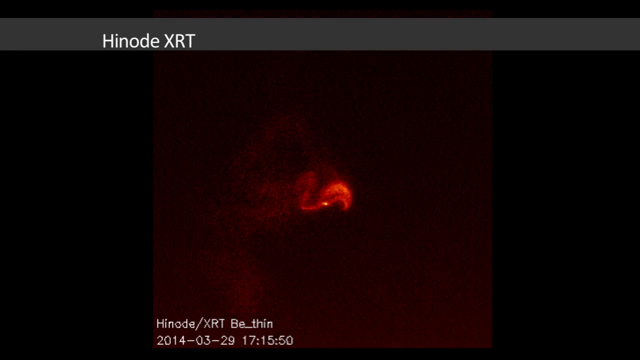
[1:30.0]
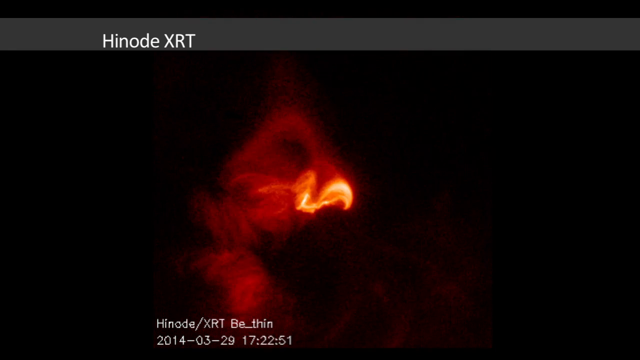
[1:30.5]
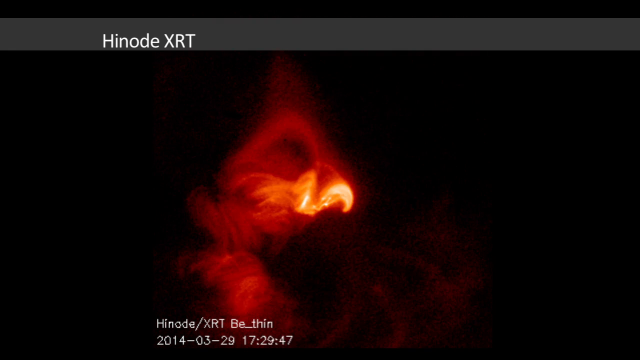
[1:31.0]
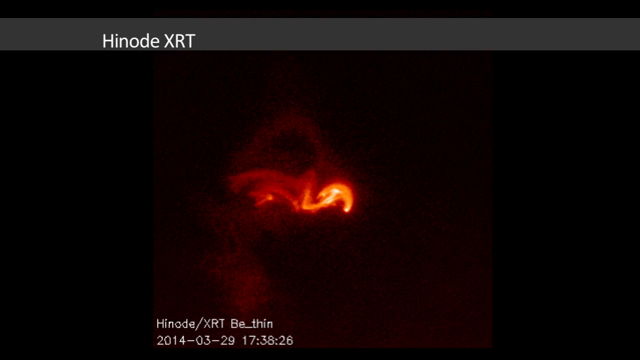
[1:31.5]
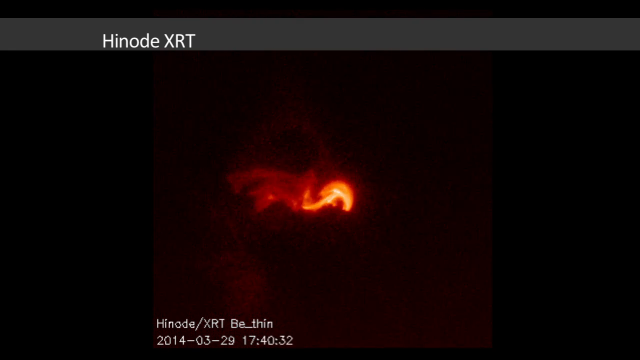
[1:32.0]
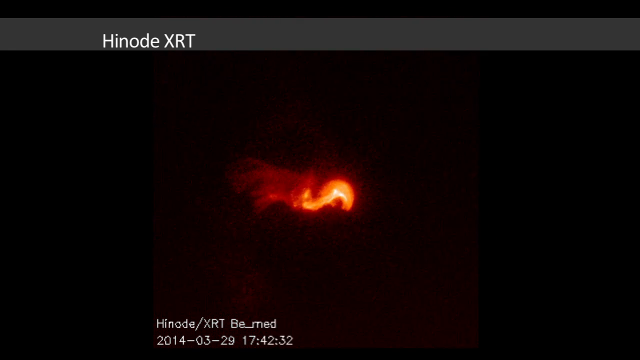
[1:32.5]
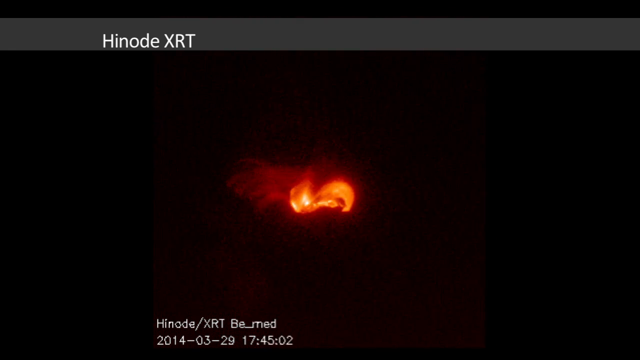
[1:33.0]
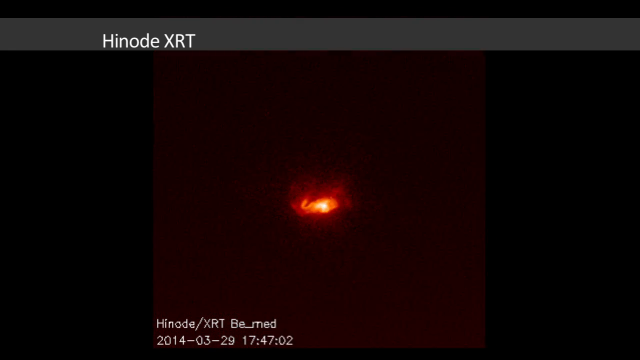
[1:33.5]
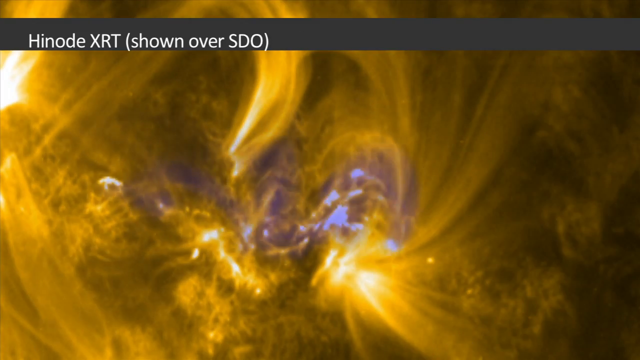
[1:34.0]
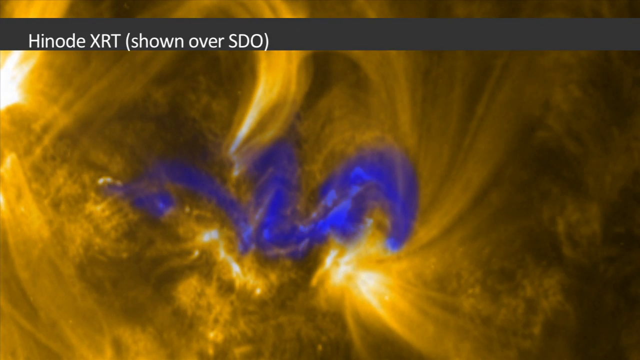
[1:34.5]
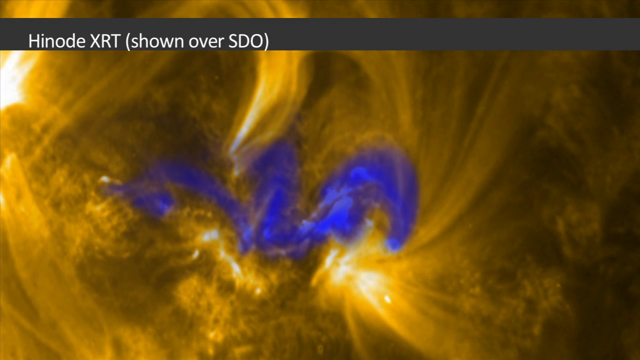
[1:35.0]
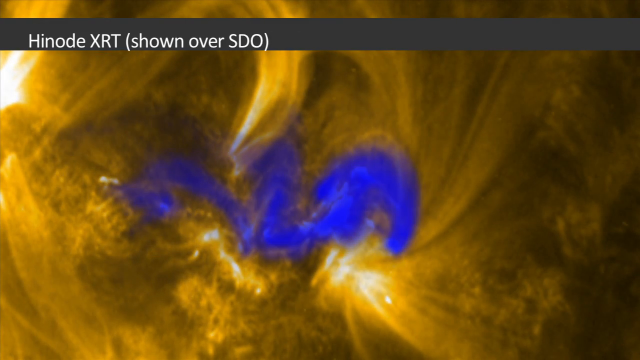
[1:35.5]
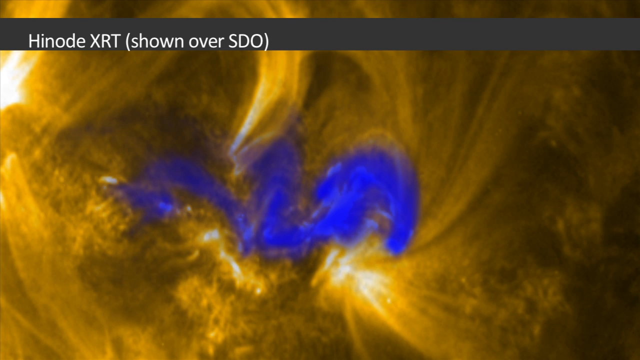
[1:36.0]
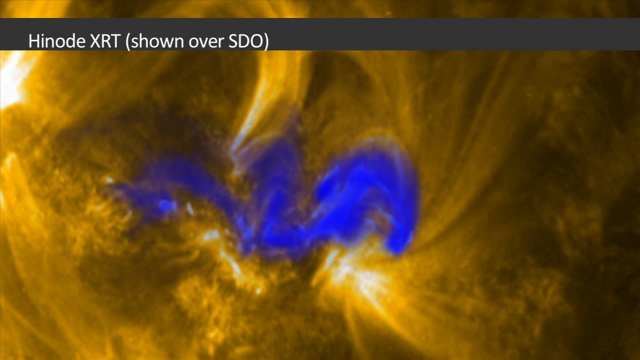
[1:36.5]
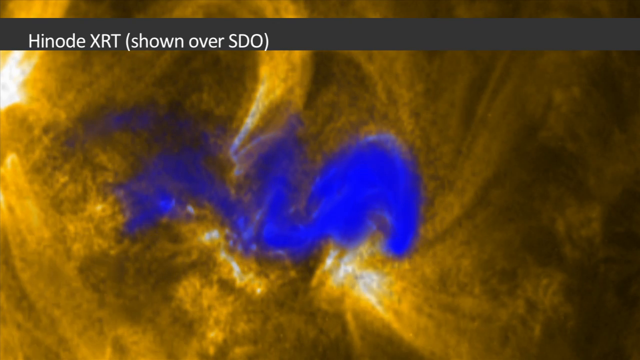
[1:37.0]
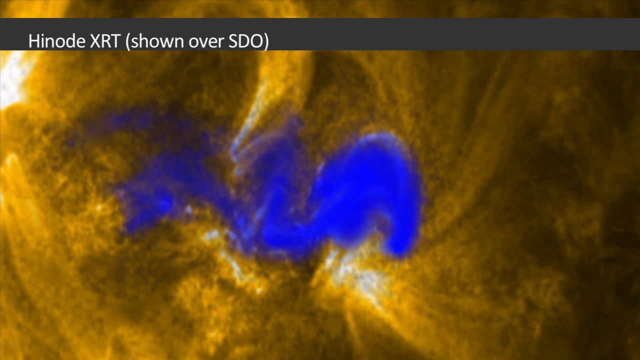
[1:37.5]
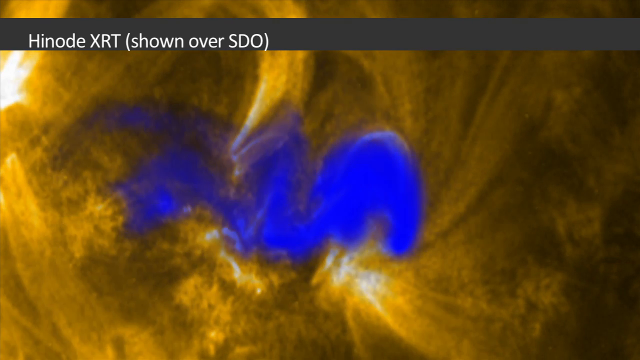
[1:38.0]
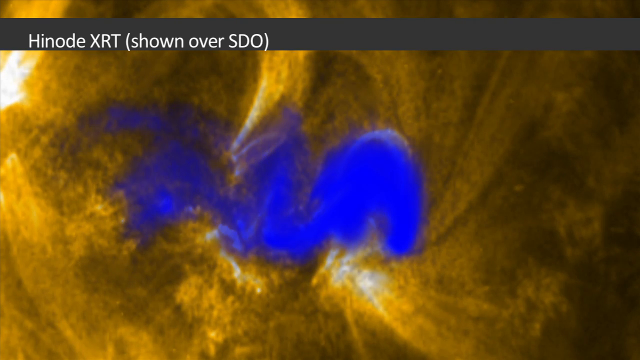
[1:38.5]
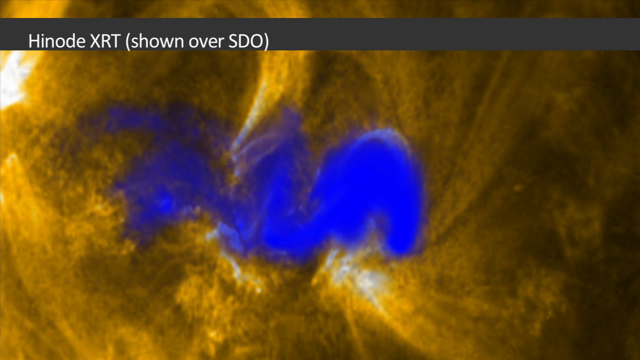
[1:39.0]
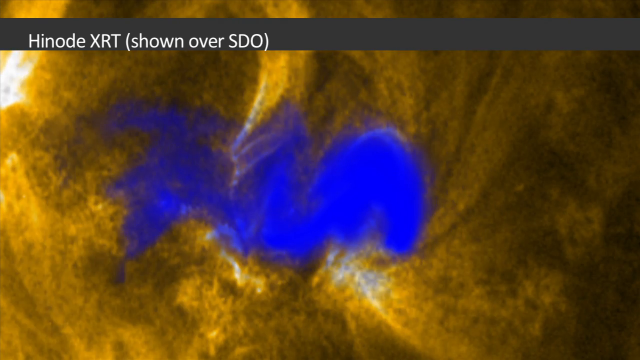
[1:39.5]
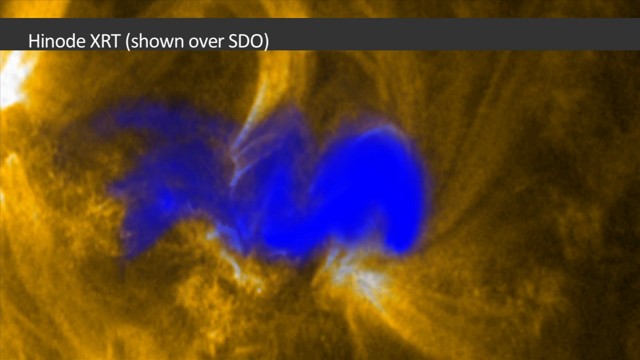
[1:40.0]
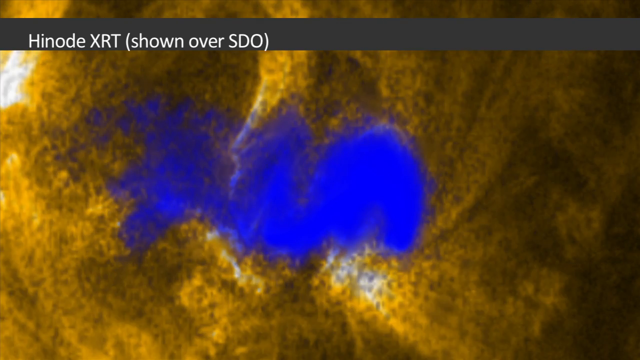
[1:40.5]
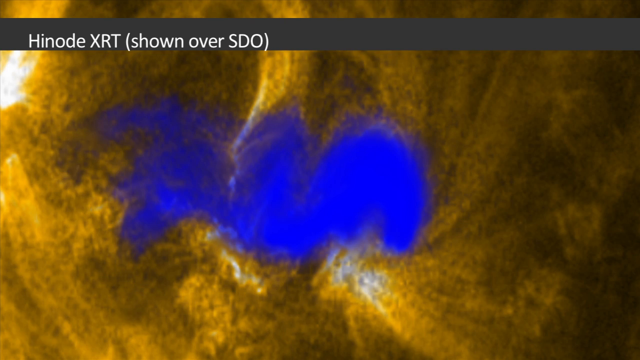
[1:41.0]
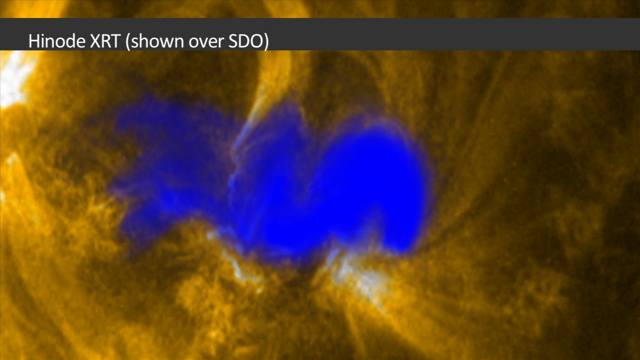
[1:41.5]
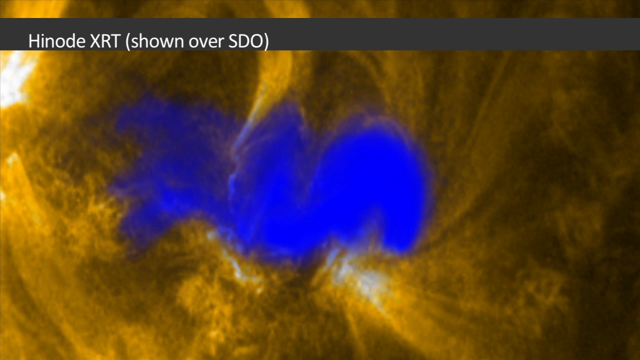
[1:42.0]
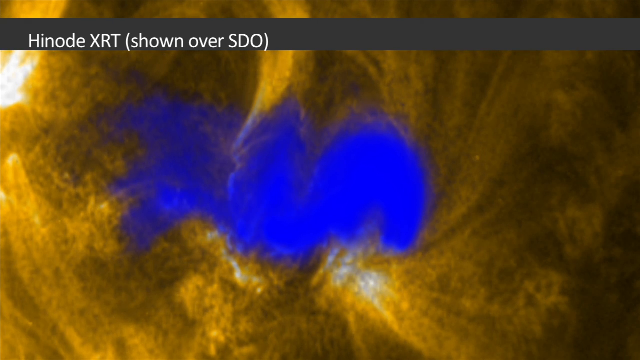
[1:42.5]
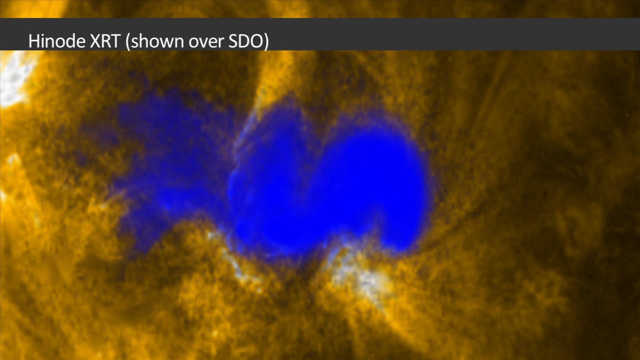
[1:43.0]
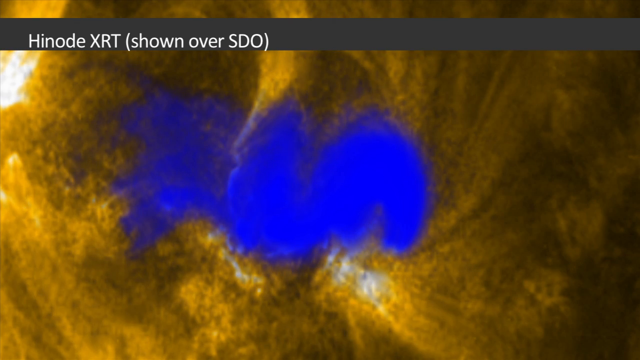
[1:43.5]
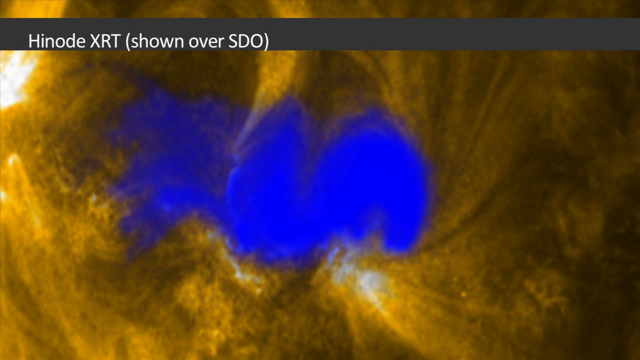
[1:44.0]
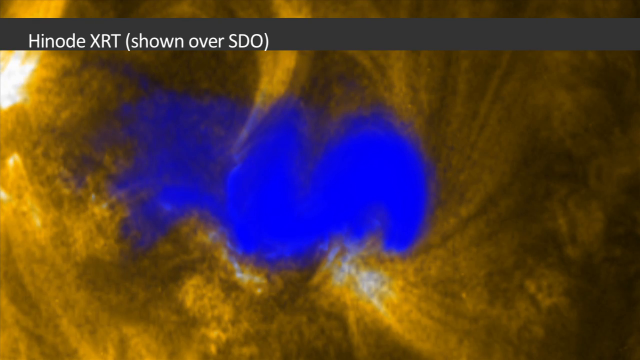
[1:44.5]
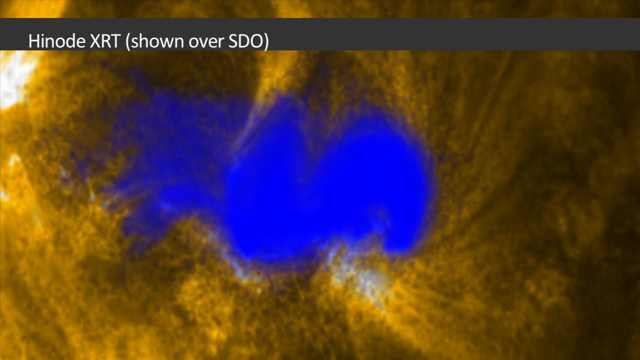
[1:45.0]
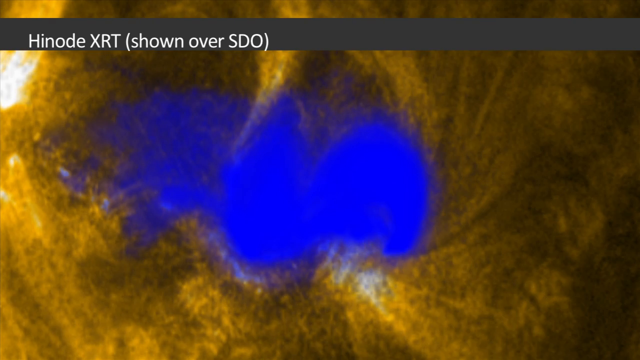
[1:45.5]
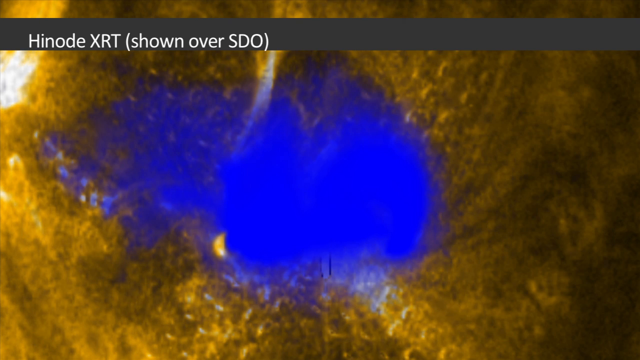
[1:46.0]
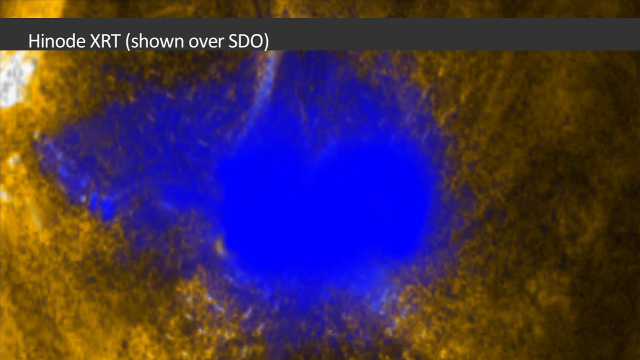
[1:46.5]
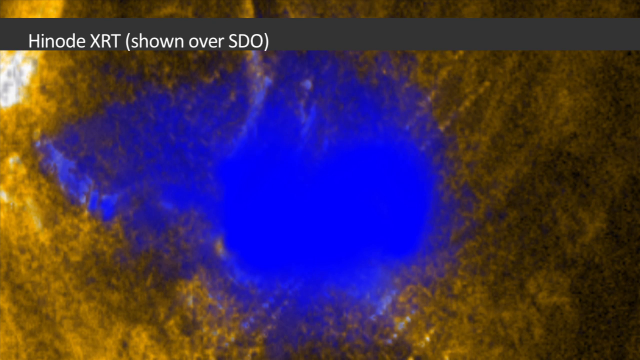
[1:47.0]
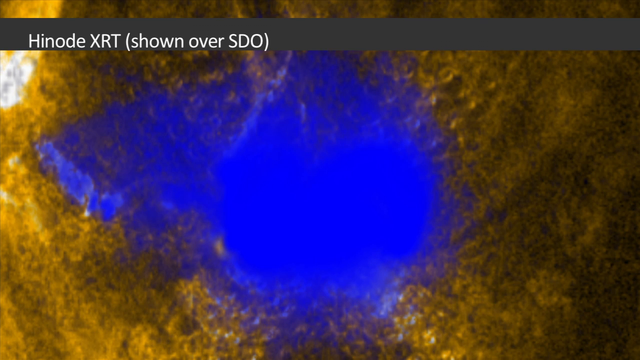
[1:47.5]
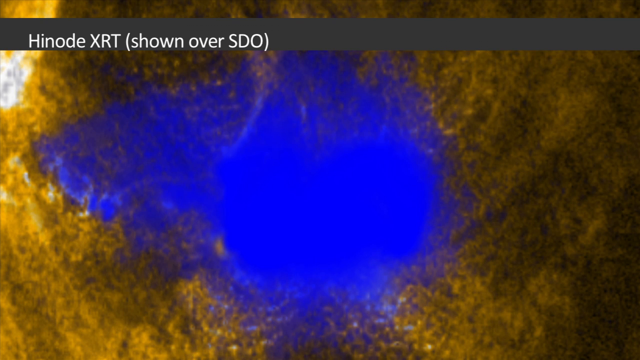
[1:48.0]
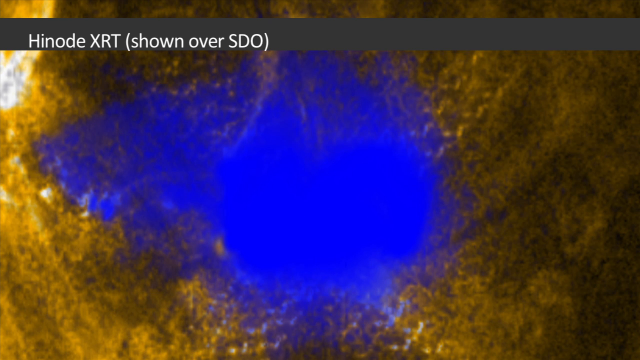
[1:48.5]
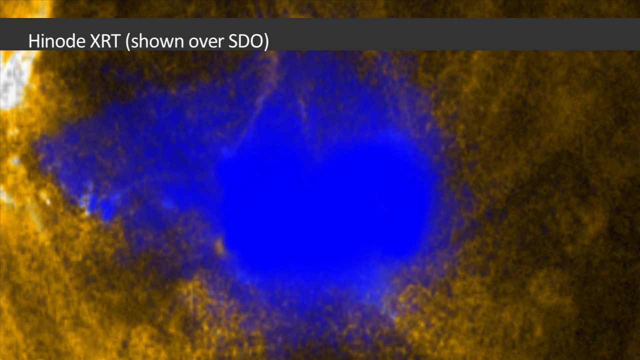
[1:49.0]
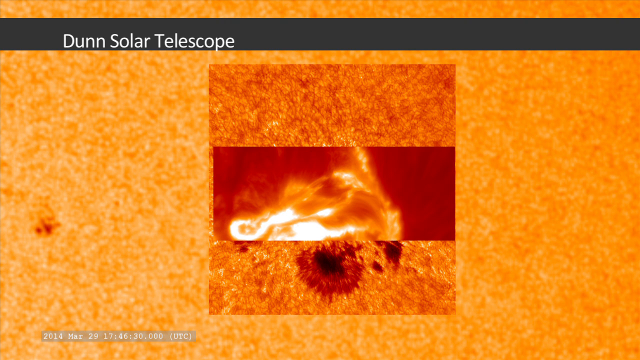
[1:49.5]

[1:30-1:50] A dark red solar flare is shown, yellow or orange in the center, with some white. Then another image shows a solar flare on a yellowish-green Sun, outlined in bright blue; the blue changes and grows as the solar flare grows behind it. There is some white underneath, and text sits in a gray strip at the top of the screen. The image looks a little pixelated and distorted, especially as it changes, and it moves very slowly, almost in slow motion, as the blue slowly expands. Next, a square is over the Sun, and in the background behind the square there is a large close-up of the Sun showing yellow, orange and white speckles on its surface, looking very realistic. Inside the square are three bright orange images of the Sun; the middle one in particular has a lot of red, and there is some yellow and white in the images too.